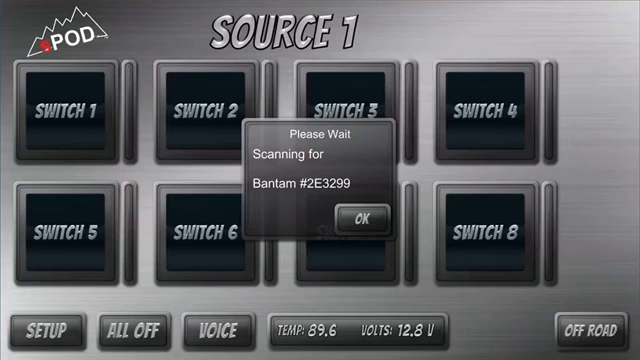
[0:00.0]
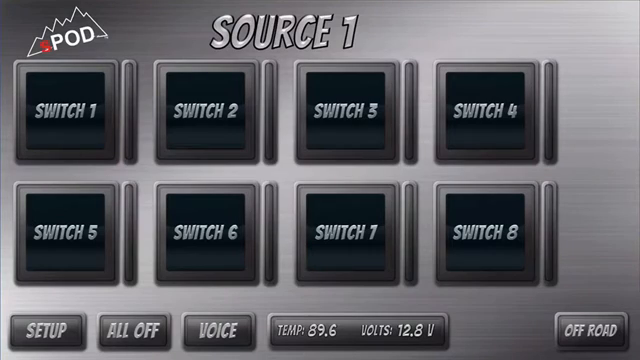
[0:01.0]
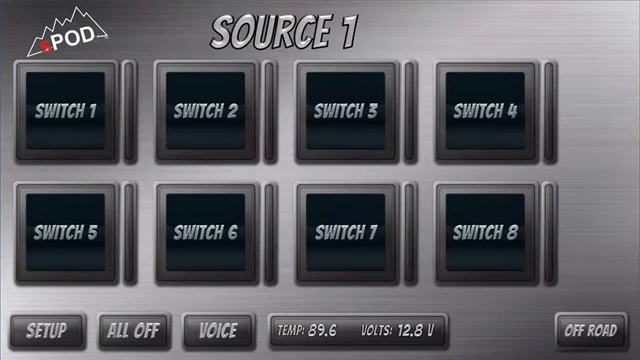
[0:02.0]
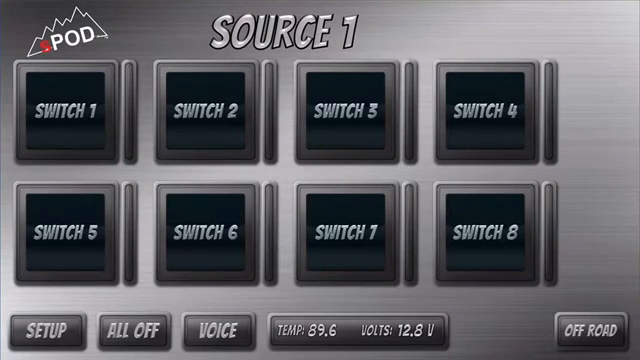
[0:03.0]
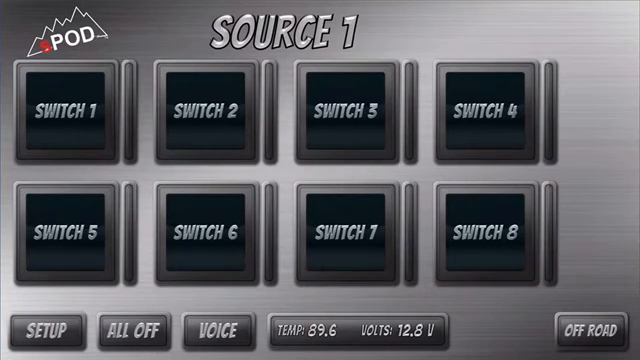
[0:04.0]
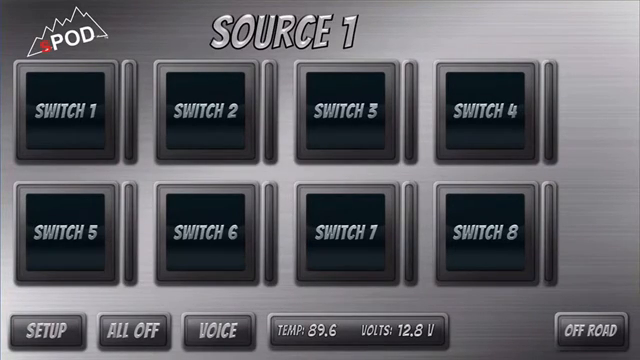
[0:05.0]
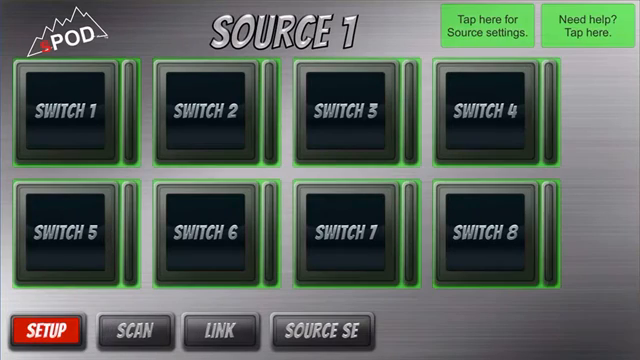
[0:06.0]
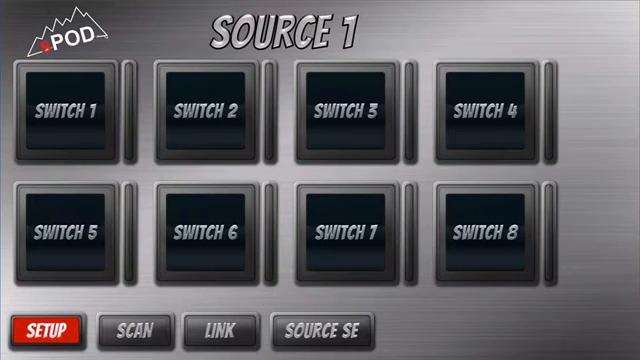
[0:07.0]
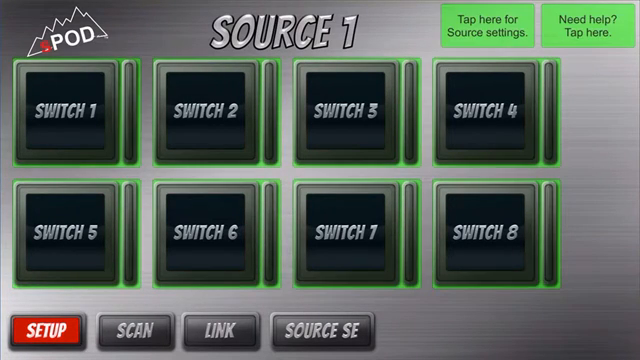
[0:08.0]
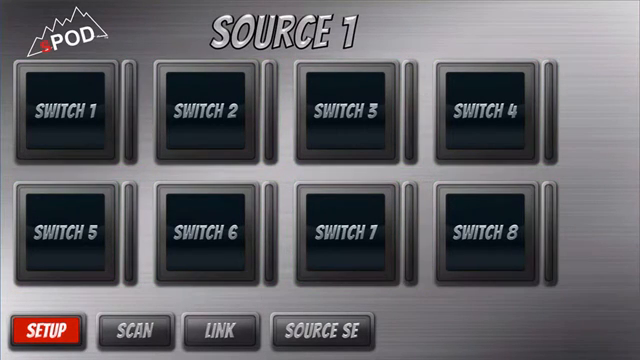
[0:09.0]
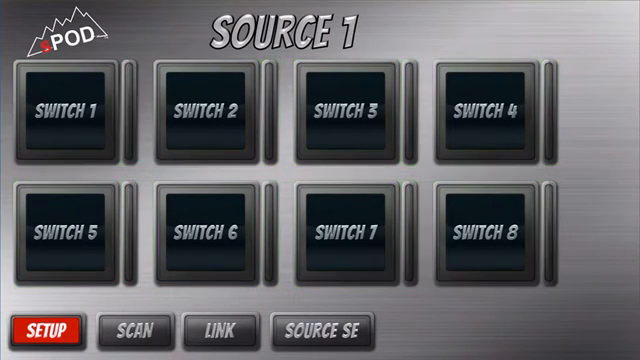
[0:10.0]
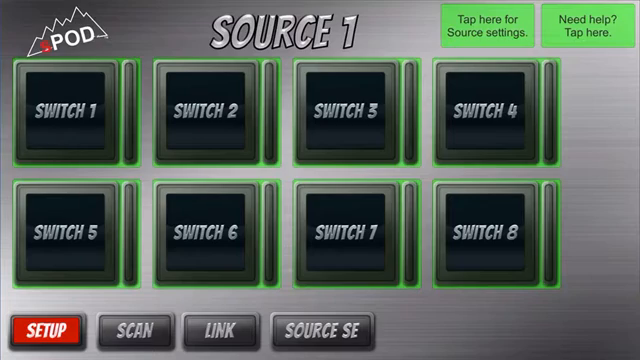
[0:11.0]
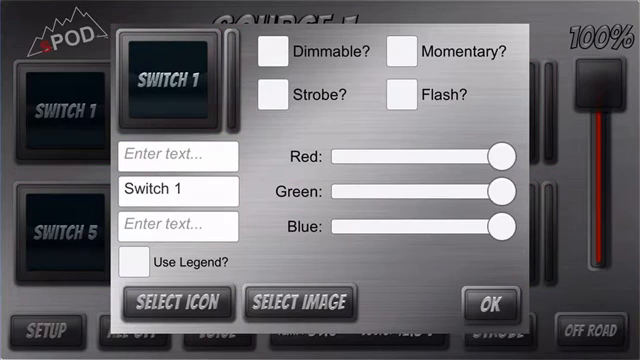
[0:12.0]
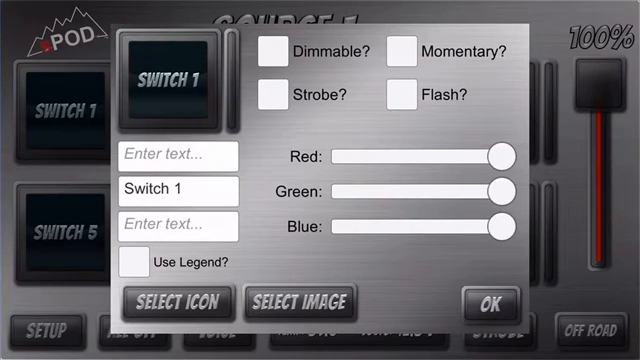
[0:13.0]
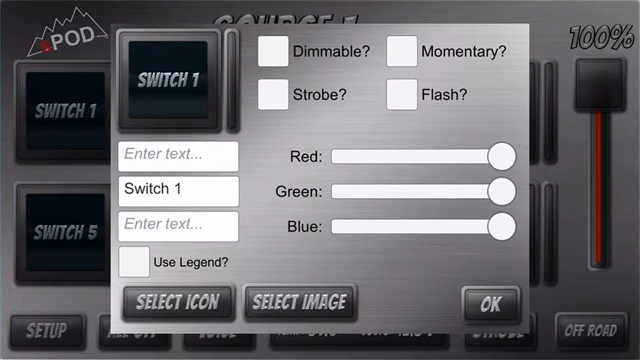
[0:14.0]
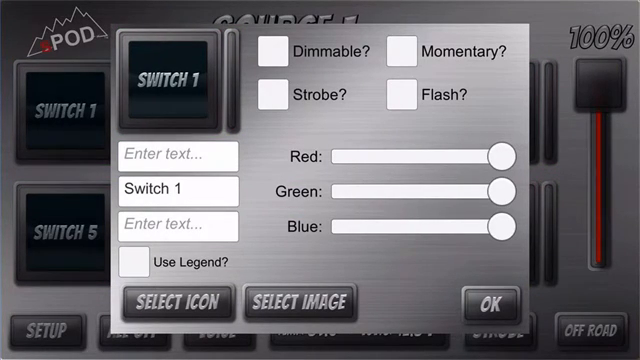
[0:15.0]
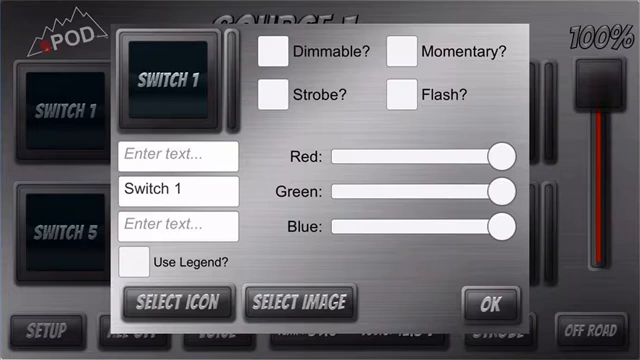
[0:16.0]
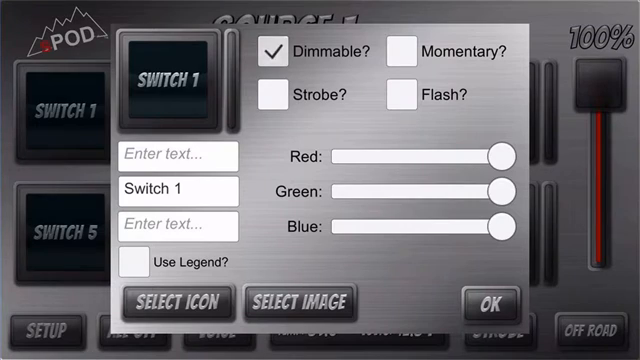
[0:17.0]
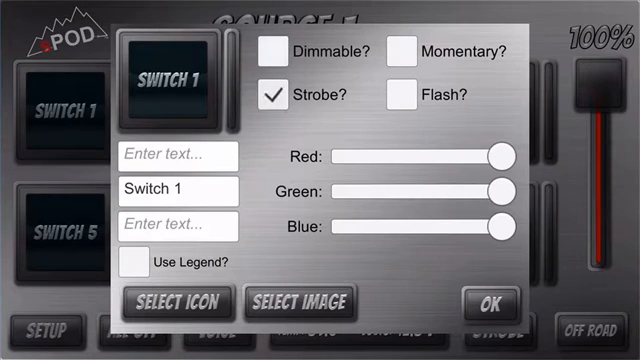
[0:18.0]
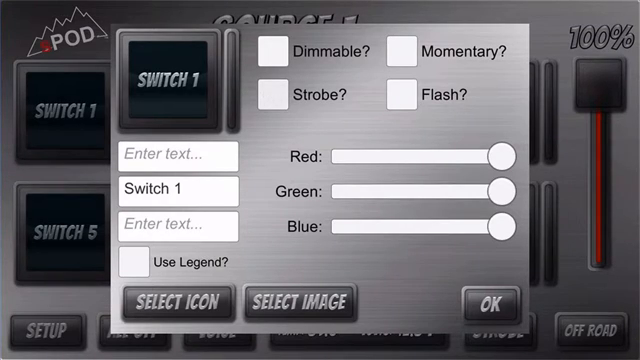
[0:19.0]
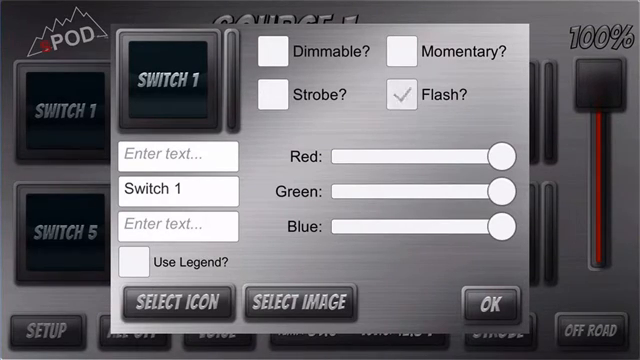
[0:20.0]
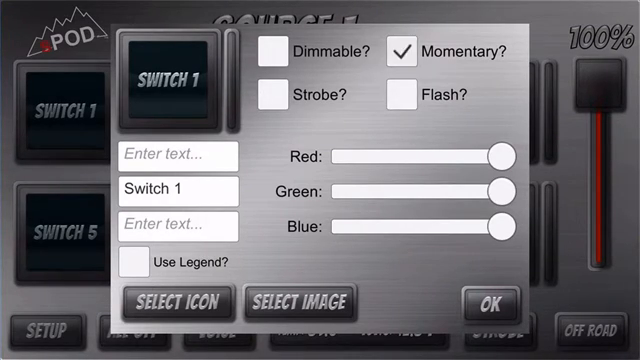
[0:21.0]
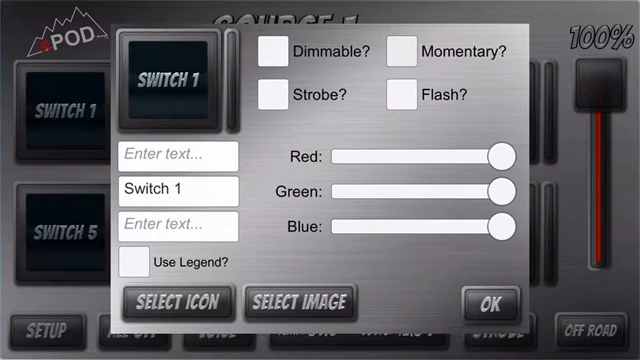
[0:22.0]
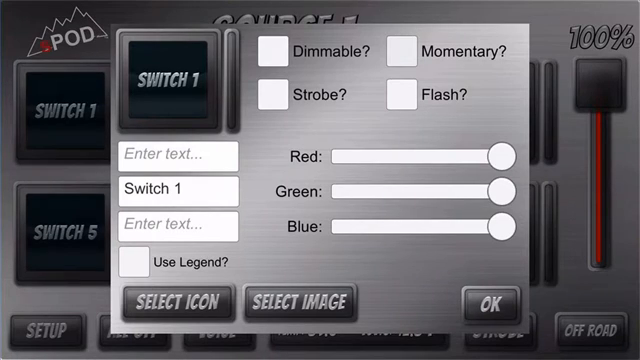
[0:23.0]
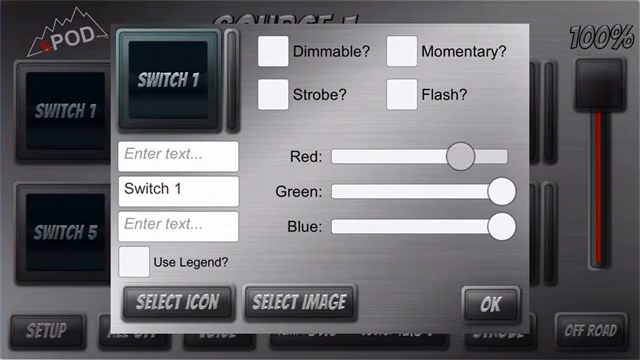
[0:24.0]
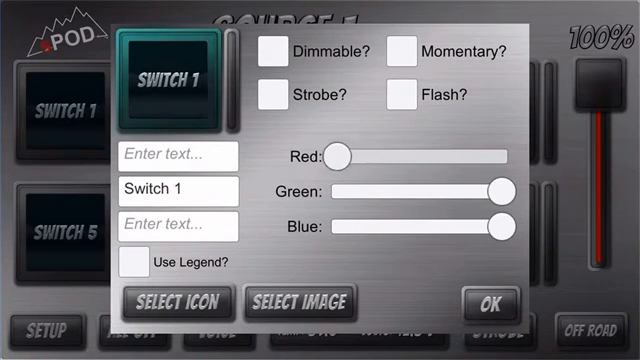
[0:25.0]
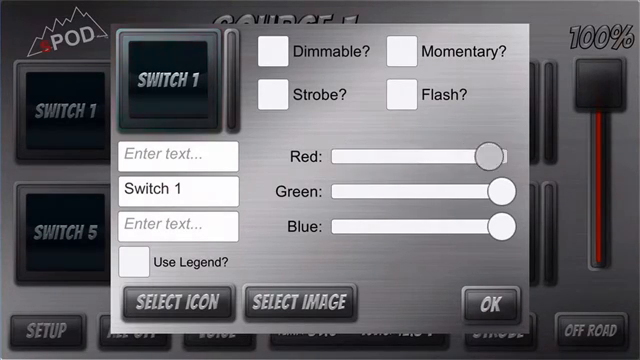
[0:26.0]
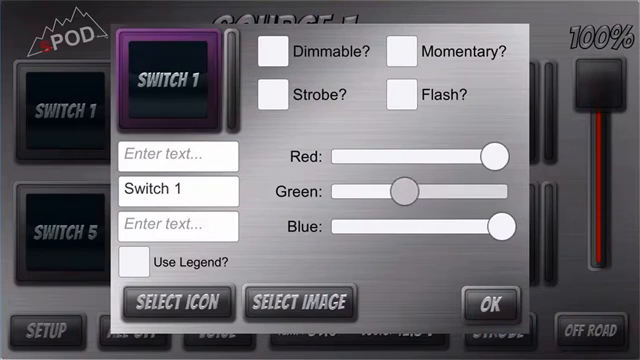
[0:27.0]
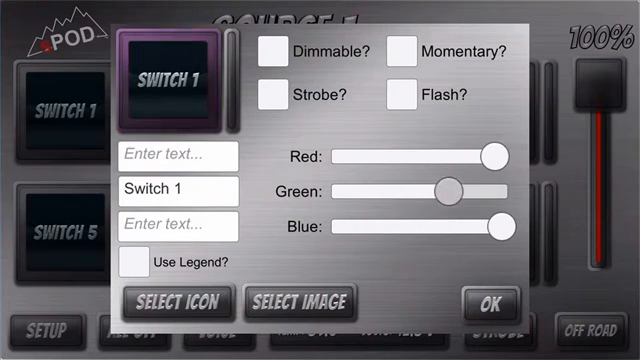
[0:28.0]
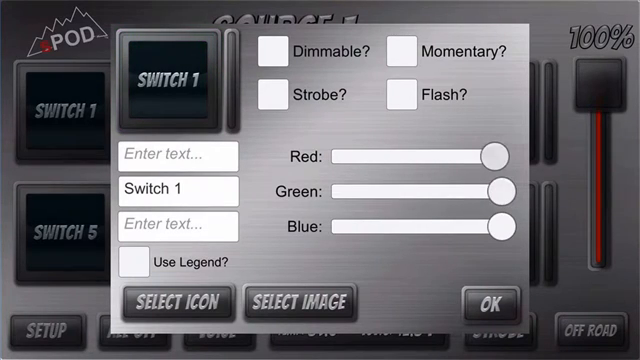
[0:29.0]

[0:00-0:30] The screen shows a gray metallic, stainless-steel background with sources on it. Some sort of green square then appears, showing the different kinds of sources available via switches; it may be an app interface of some kind or possibly a lighting interface. The user moves the settings back and forth from full to none several times, then toggles options such as dimmable, strobe, flash and momentary. Only one person seems to be controlling the system. When he clicks on switch one, its interface opens; otherwise the main screen does not really change. The system applies to up to eight switches on the s pod source one.